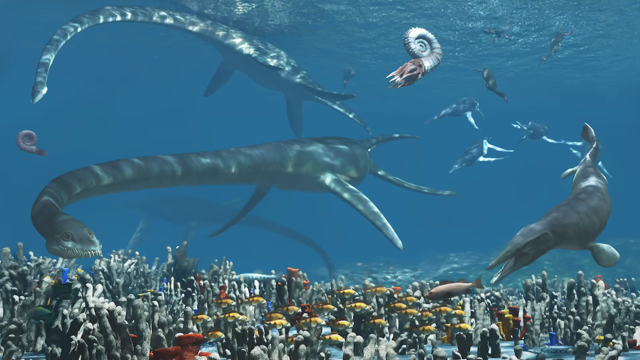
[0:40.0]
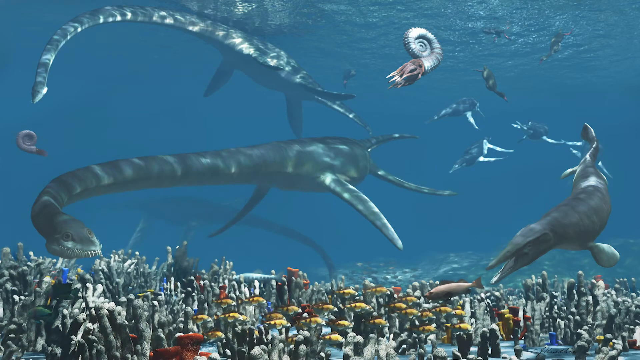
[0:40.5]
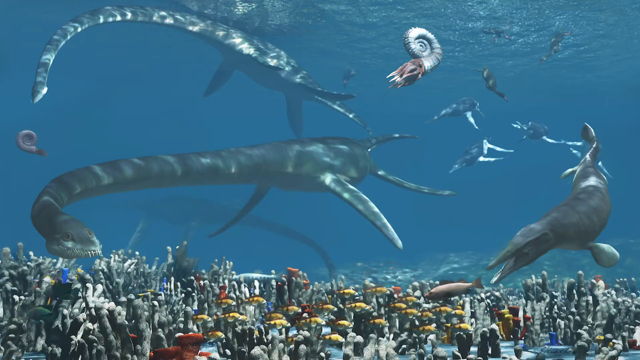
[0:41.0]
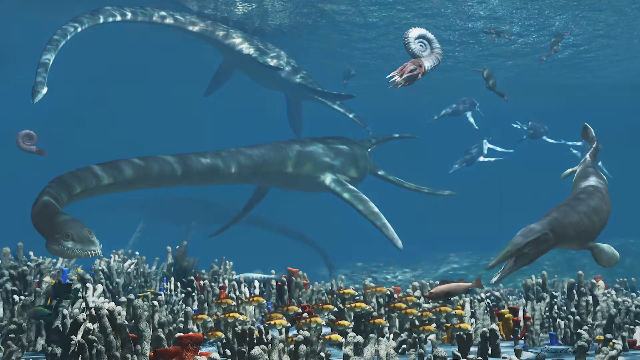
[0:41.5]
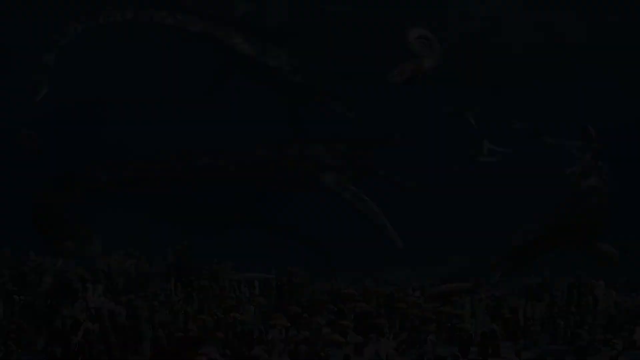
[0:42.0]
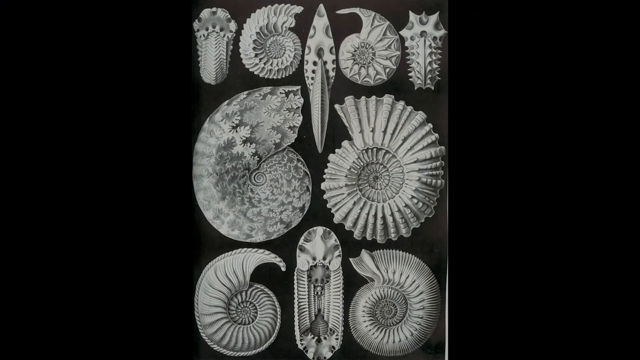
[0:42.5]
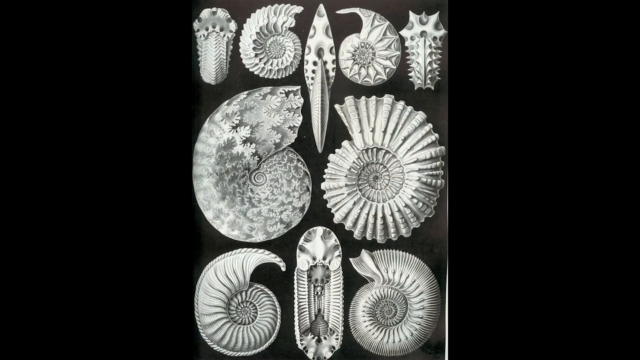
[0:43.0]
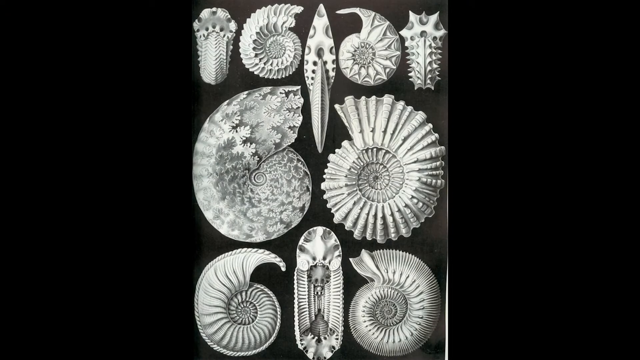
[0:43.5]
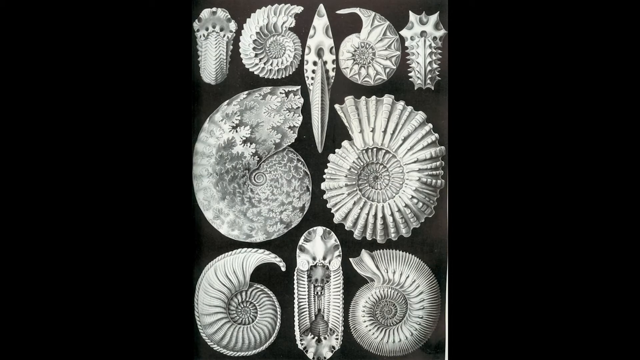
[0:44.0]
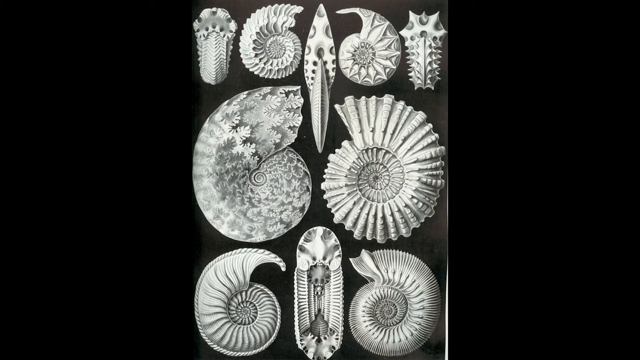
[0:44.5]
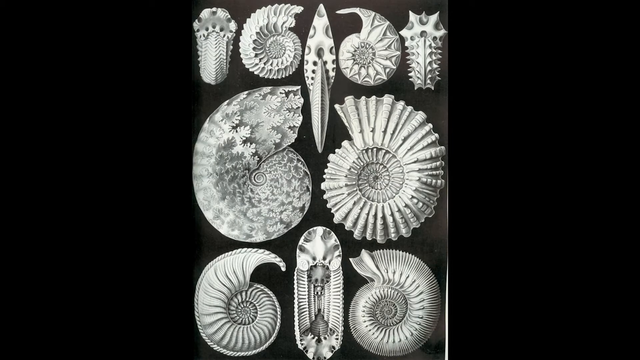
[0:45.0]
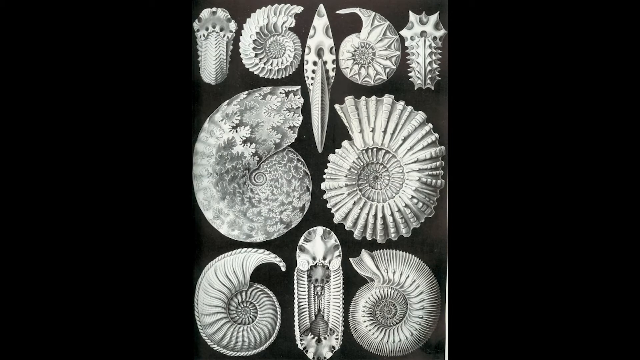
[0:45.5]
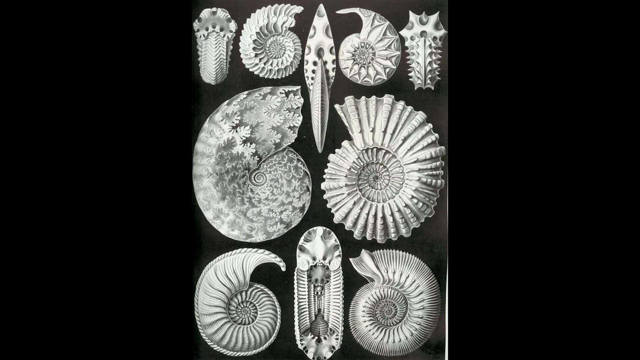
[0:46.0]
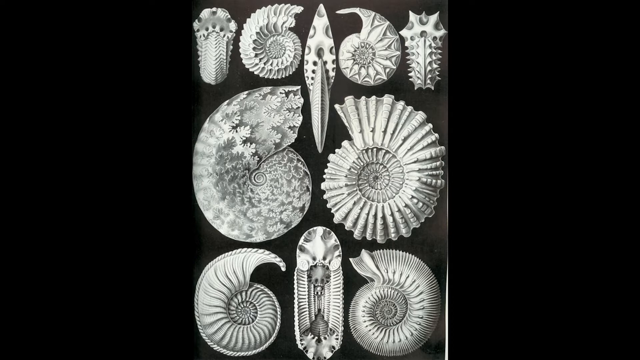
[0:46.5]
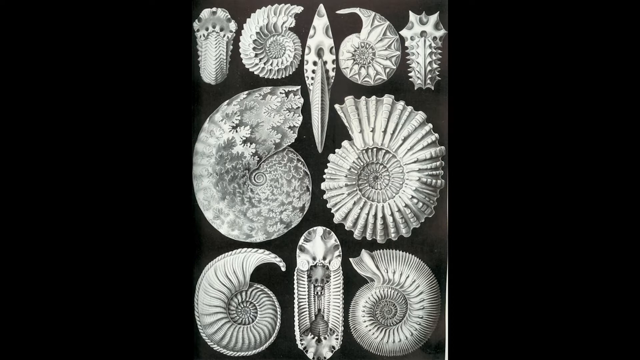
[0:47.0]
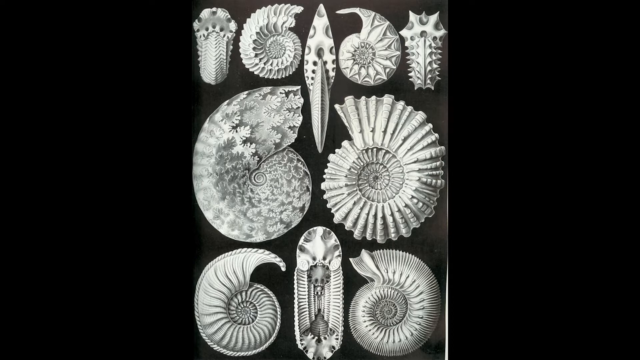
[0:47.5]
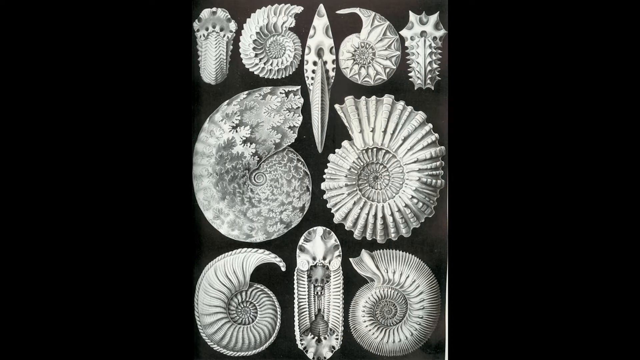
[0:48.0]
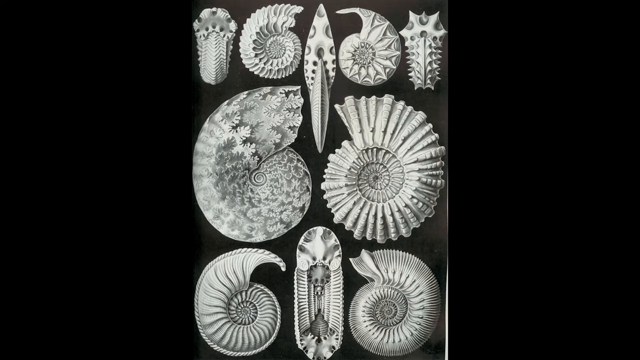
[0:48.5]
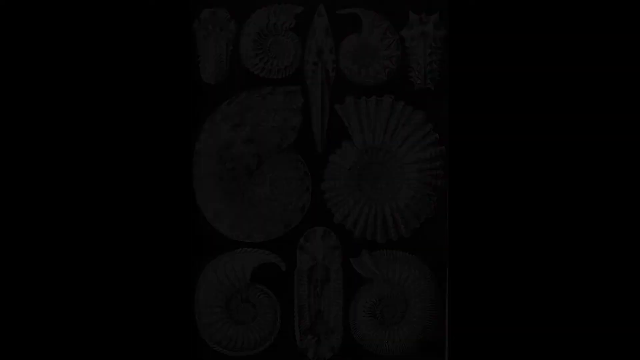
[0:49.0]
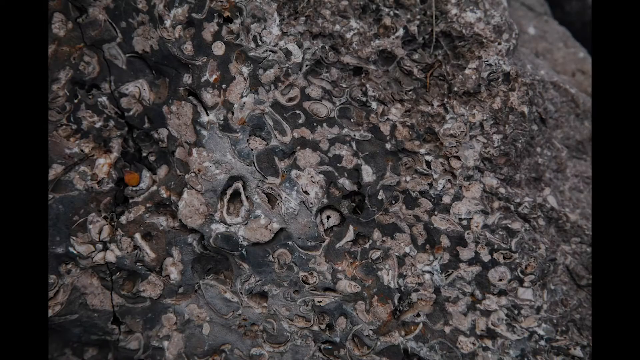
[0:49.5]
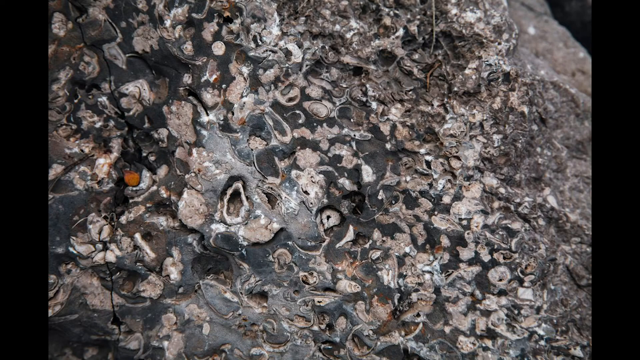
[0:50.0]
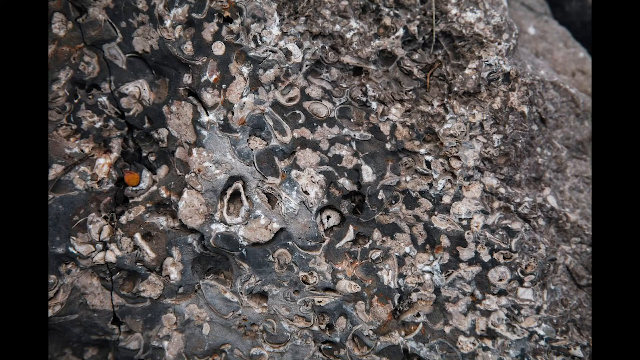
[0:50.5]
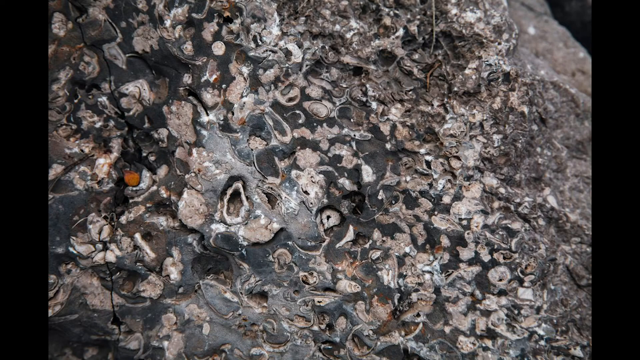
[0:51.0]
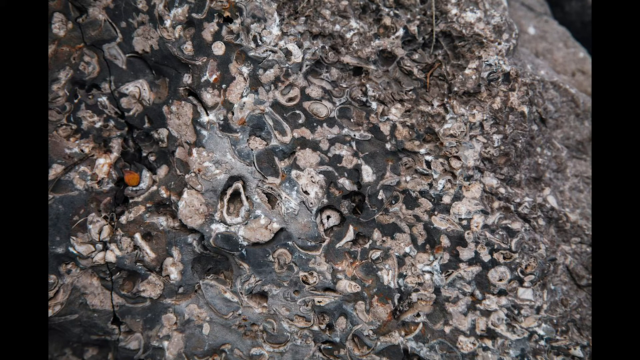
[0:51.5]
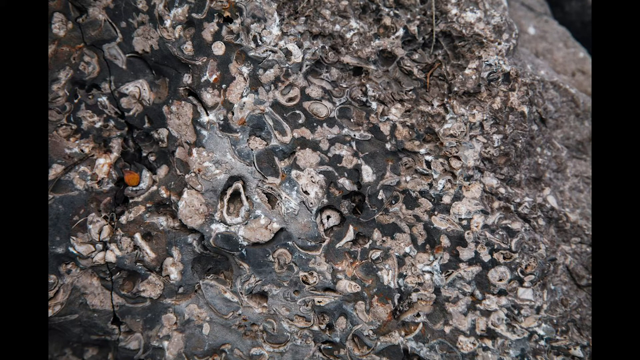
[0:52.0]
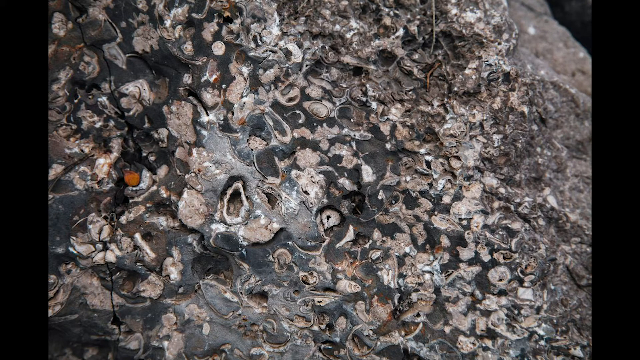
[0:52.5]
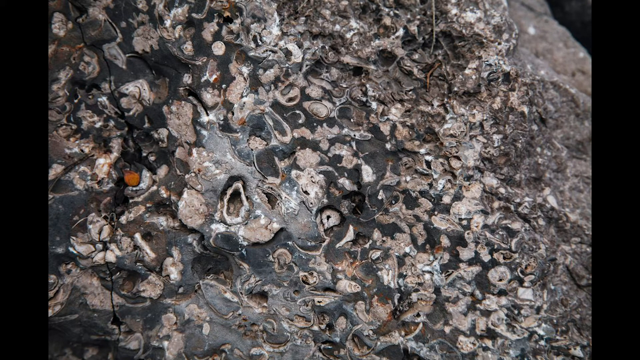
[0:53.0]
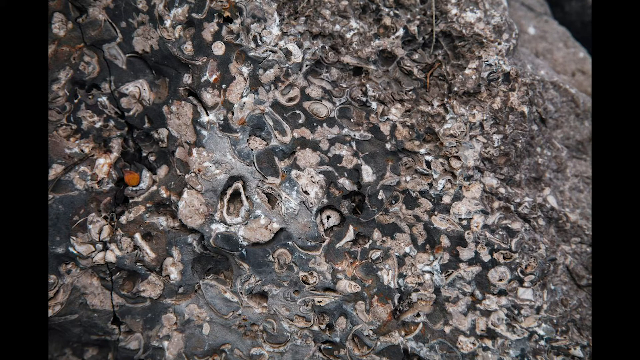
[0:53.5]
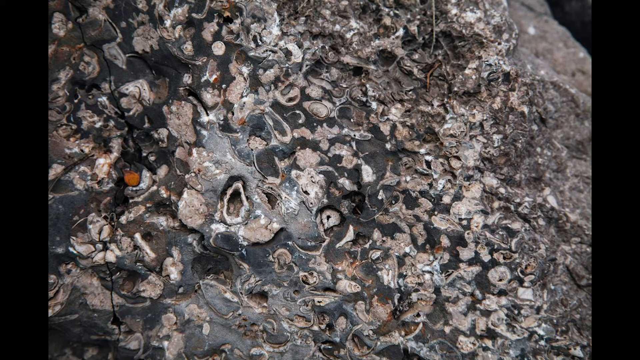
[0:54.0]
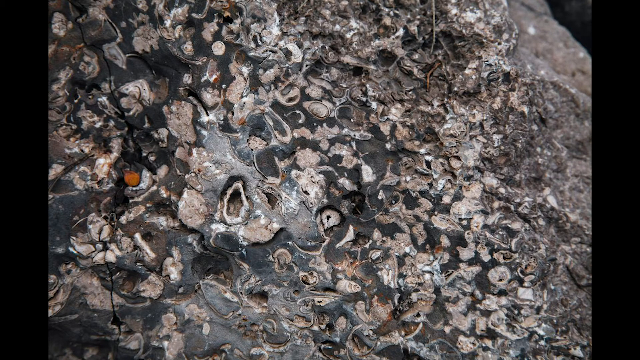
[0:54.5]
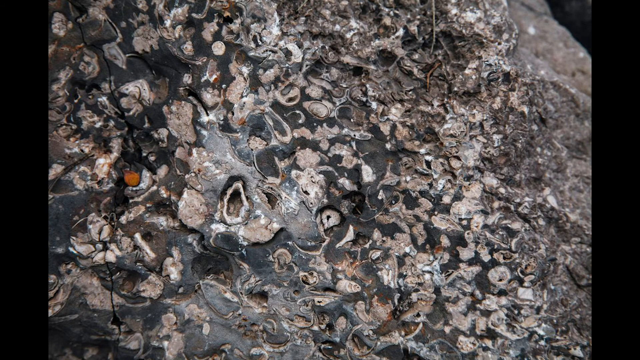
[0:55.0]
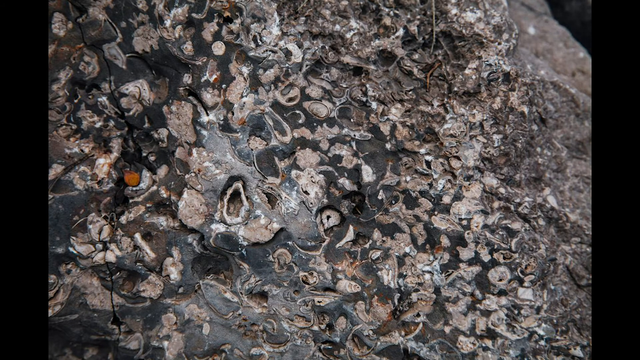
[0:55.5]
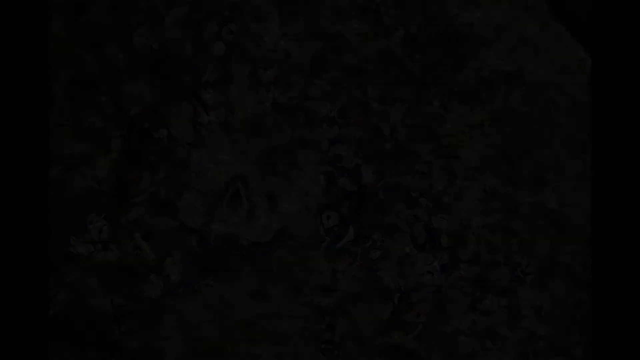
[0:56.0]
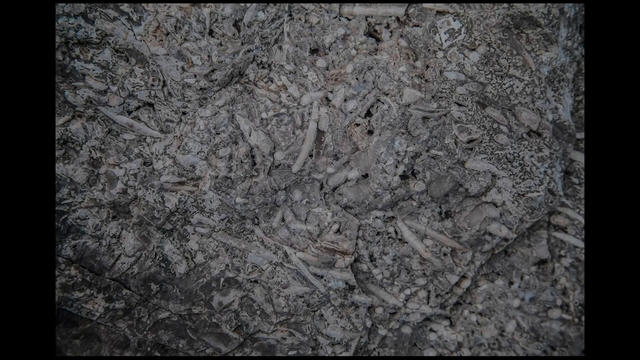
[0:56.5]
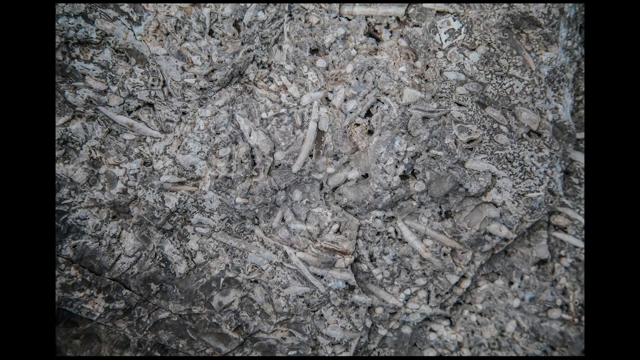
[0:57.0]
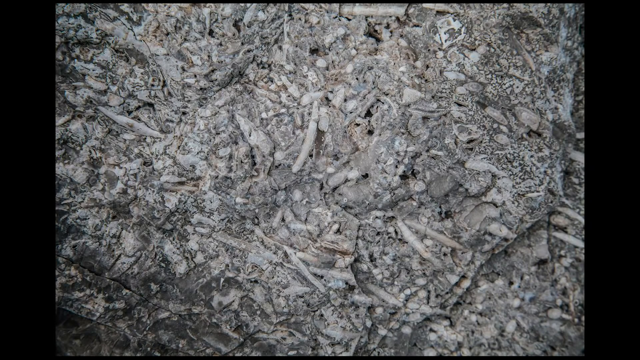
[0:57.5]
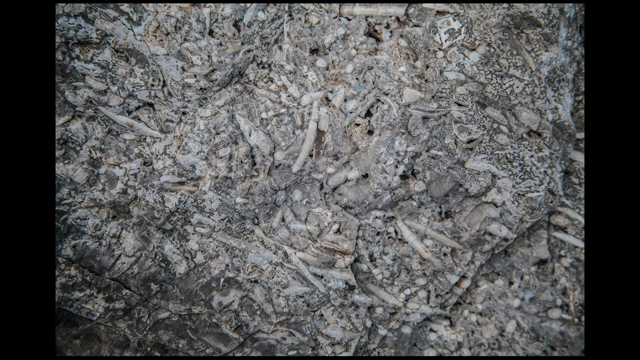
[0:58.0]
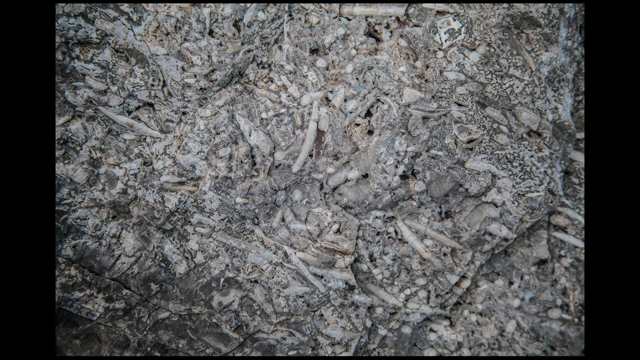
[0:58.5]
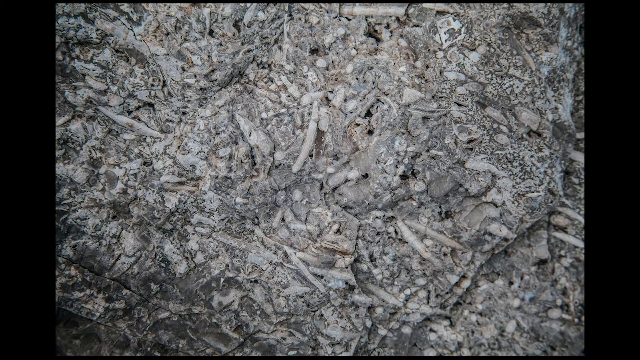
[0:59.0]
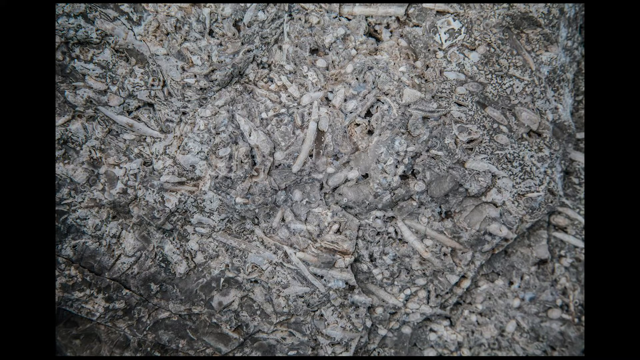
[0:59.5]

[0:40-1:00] An underwater shot shows more prehistoric sea creatures with snake-like heads on long necks. Their main bodies are like that of a turtle or something similar, with long flippers and a tail; the flippers are smooth, triangular shapes with no claws. Two of these long creatures are in the center and left portions. A bunch of gray, thin, rod-like corals cover the bottom of the entire view, and a bunch of yellow fish with brown stripes on the lower half of their bodies swim to the right. On the right, another creature that looks like an alligator-shark mix chases a pinkish fish, and there appear to be more of them in the background. The video cuts to a black-and-white picture of a bunch of sea snail shells forming a sort of decorative picture. They are lined up facing each other, one clockwise and one counterclockwise, side by side, forming parallel rows. Between them are different seashell creatures; the one on the bottom looks like a pod and the top one looks triangular and thin. Then the view switches to a top view of a bunch of rocks or seashells stuck in black rock, dried up.